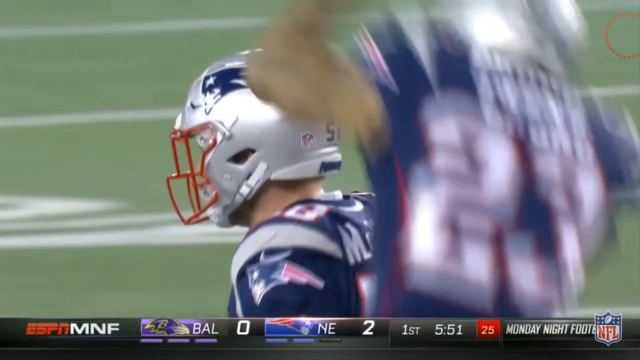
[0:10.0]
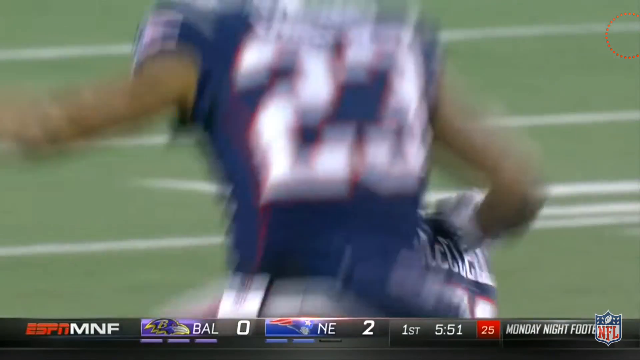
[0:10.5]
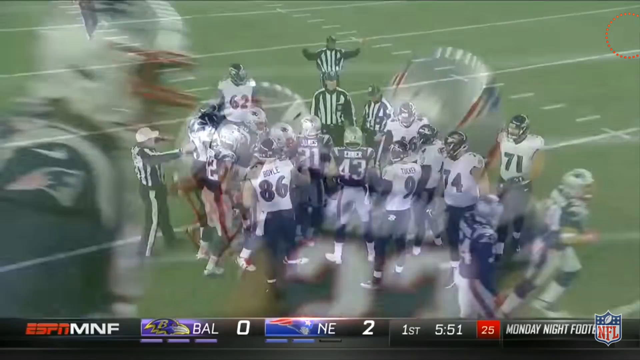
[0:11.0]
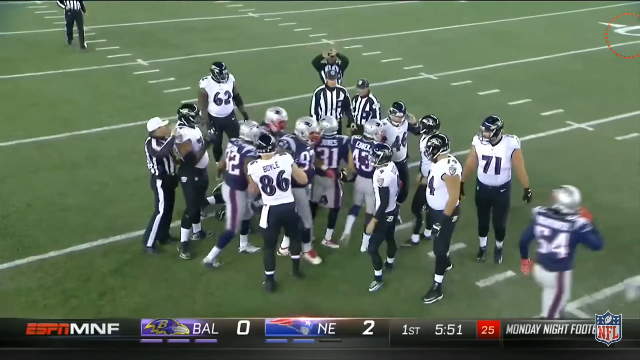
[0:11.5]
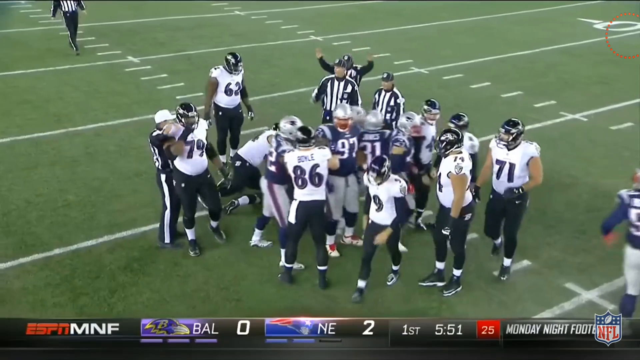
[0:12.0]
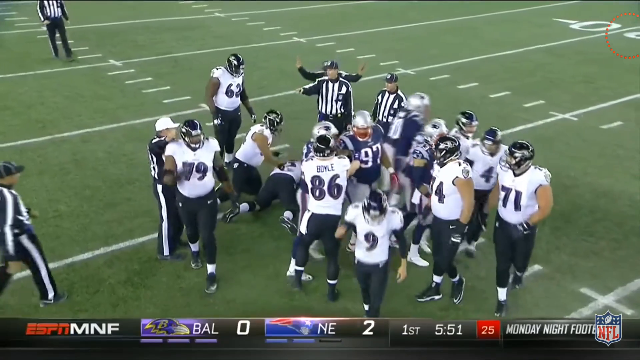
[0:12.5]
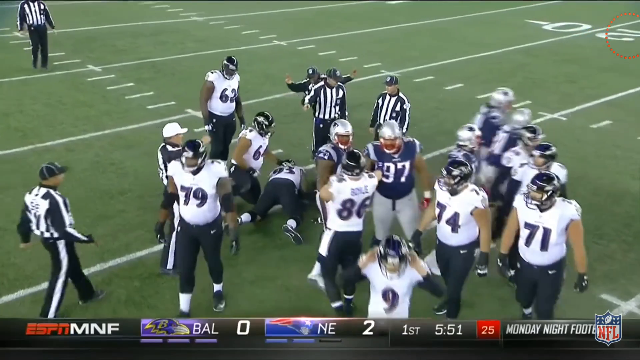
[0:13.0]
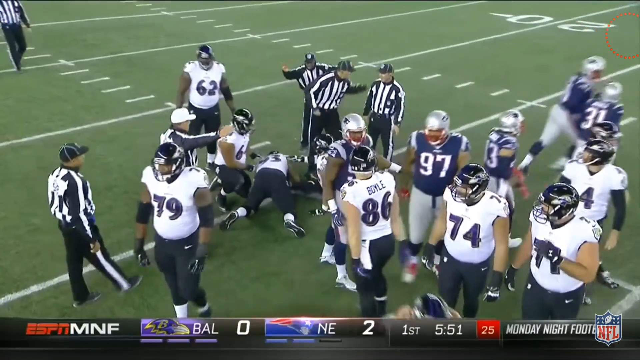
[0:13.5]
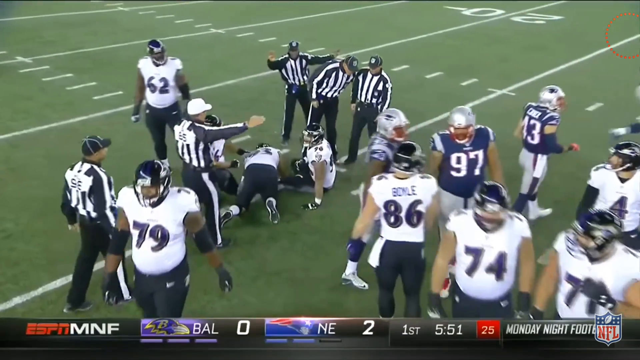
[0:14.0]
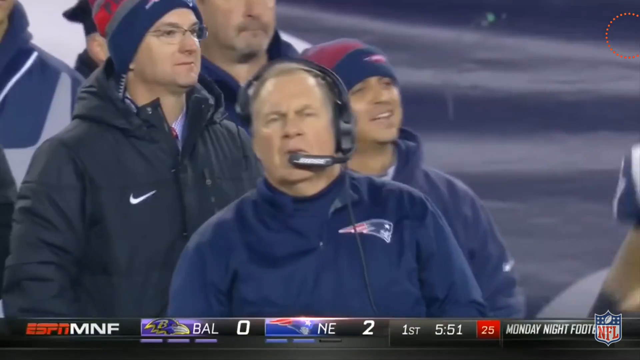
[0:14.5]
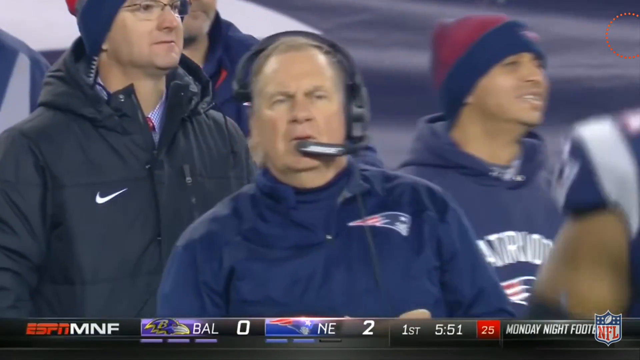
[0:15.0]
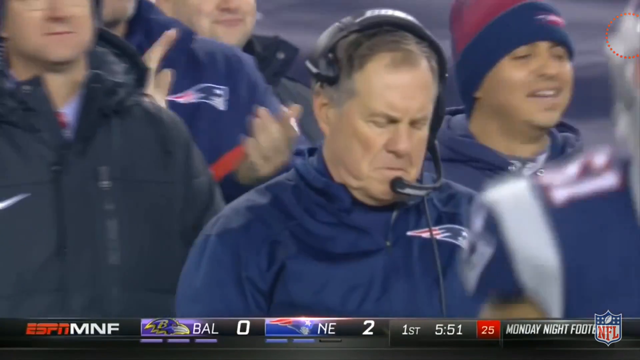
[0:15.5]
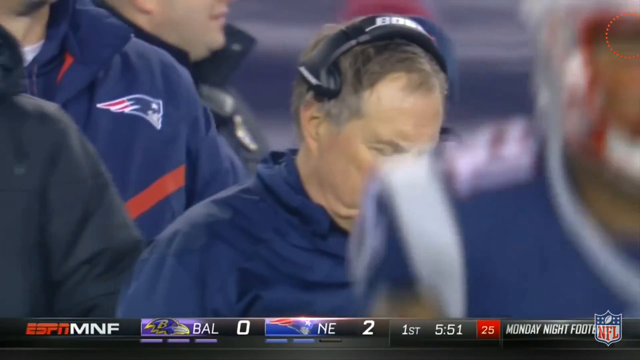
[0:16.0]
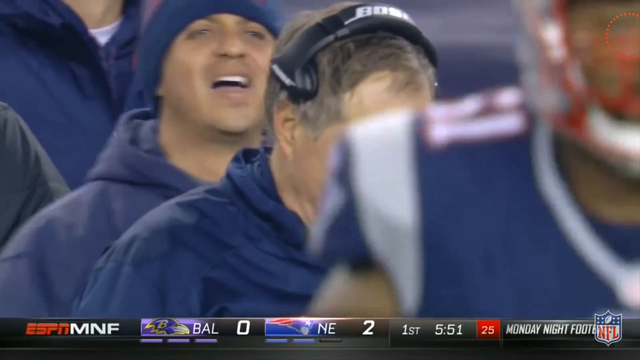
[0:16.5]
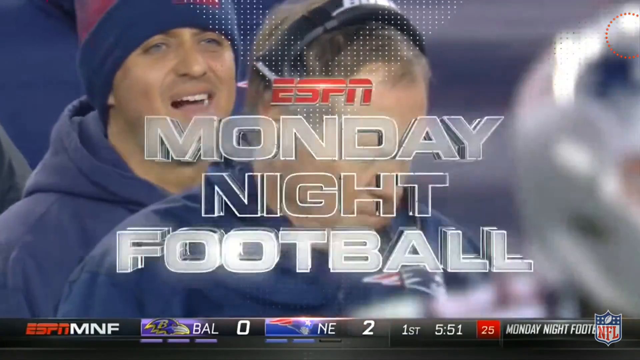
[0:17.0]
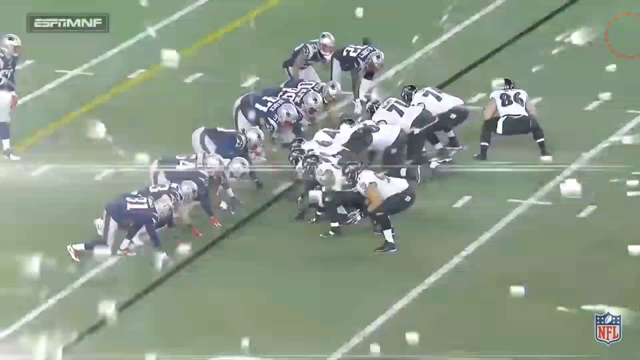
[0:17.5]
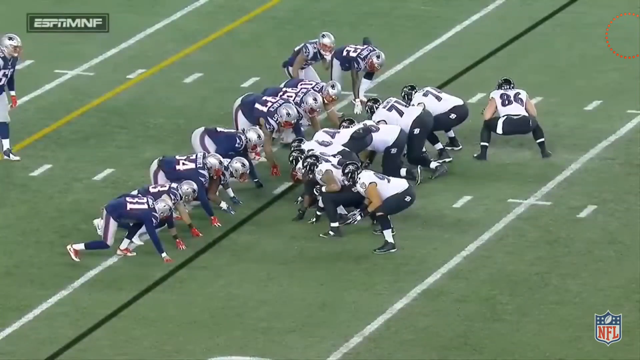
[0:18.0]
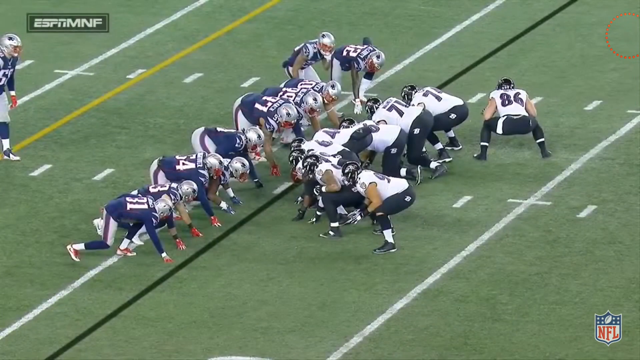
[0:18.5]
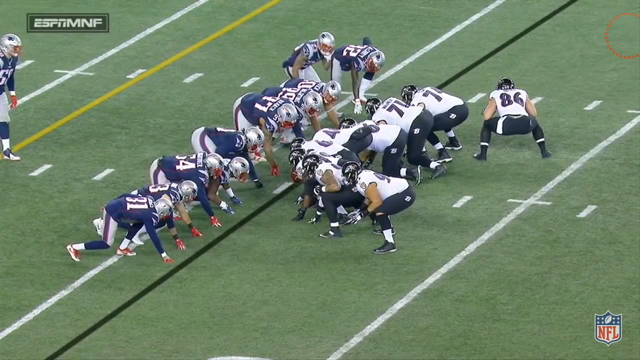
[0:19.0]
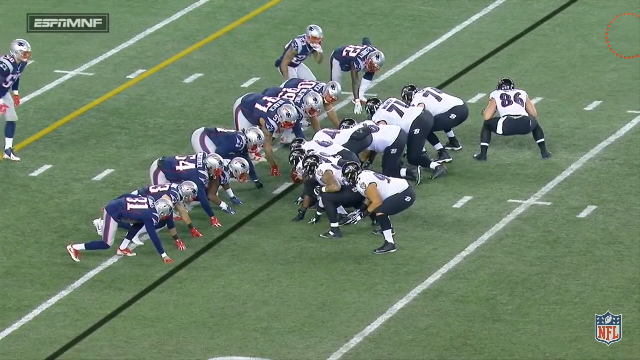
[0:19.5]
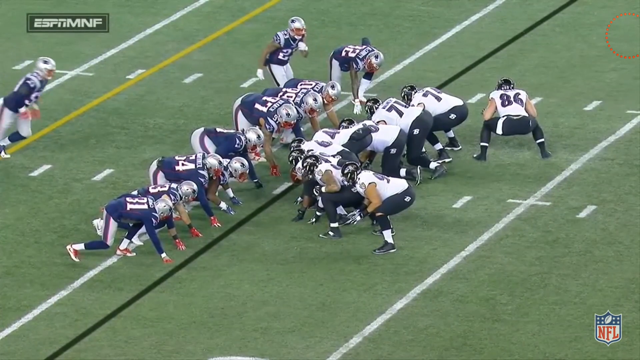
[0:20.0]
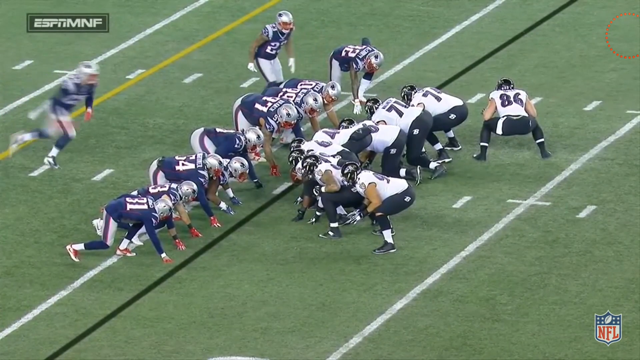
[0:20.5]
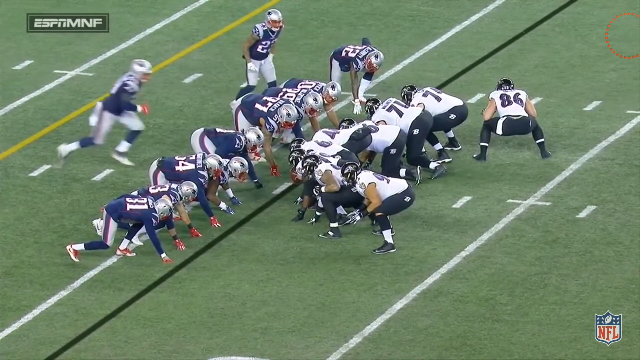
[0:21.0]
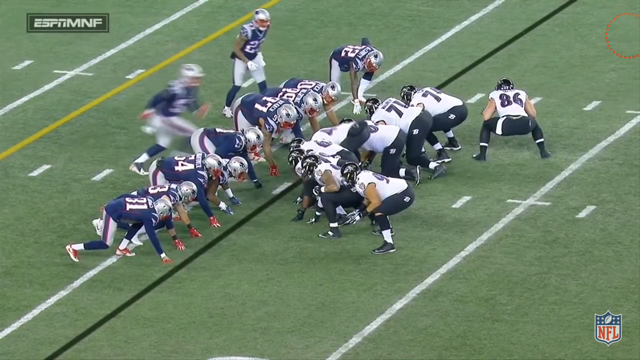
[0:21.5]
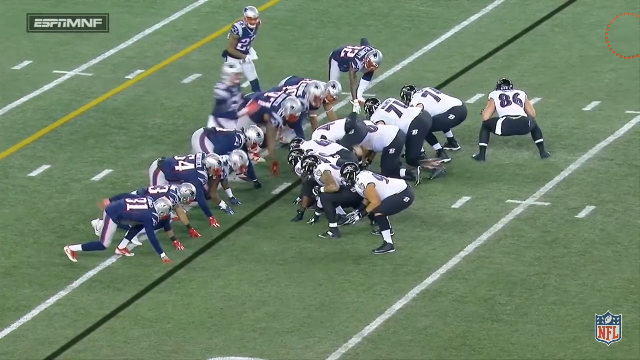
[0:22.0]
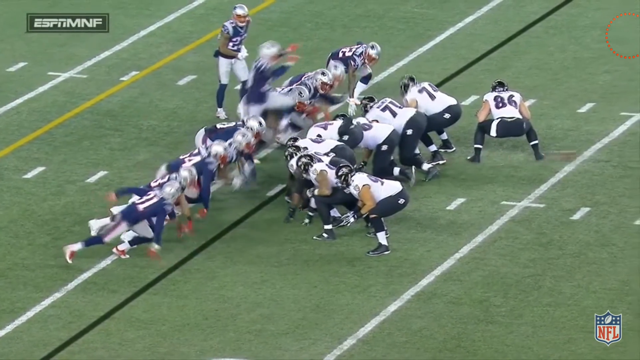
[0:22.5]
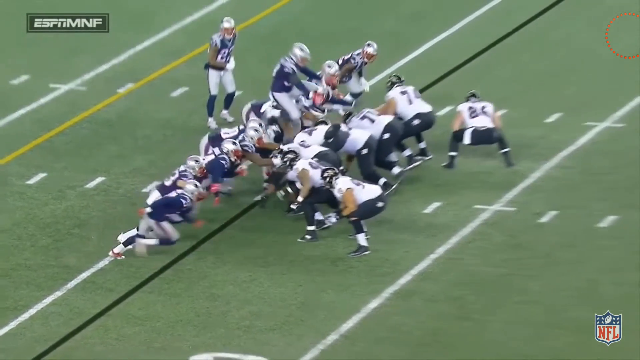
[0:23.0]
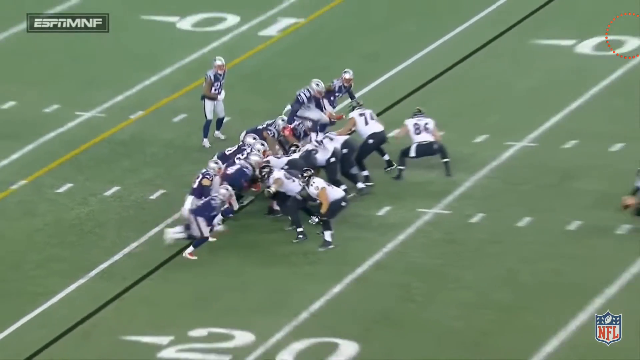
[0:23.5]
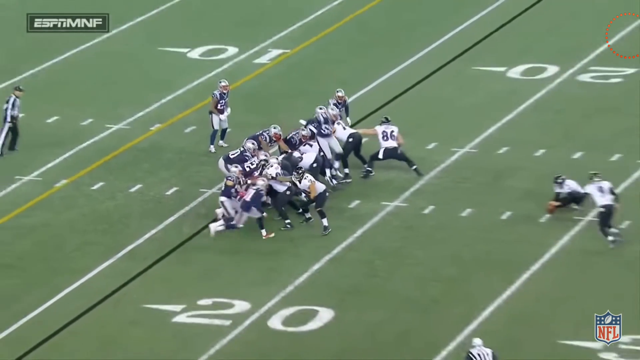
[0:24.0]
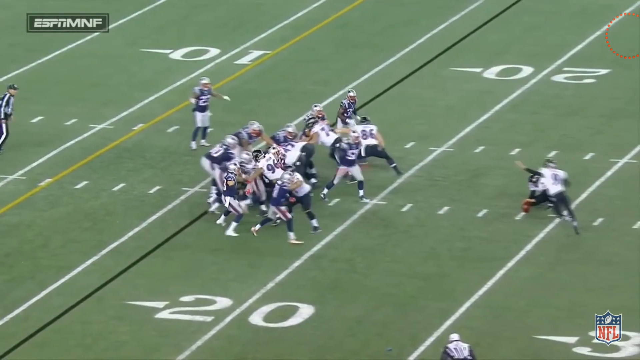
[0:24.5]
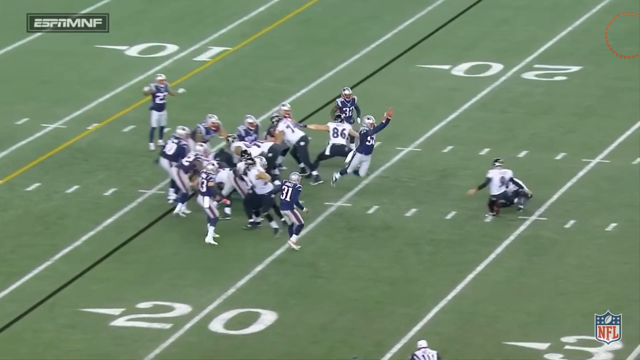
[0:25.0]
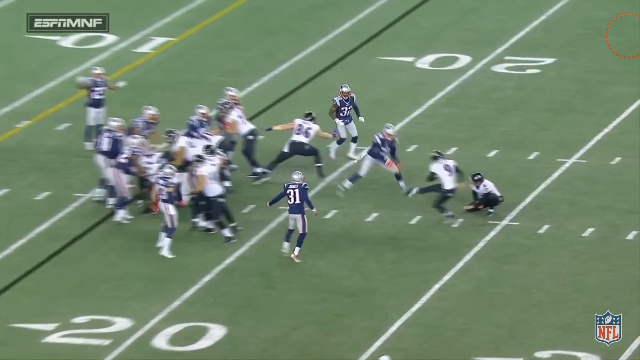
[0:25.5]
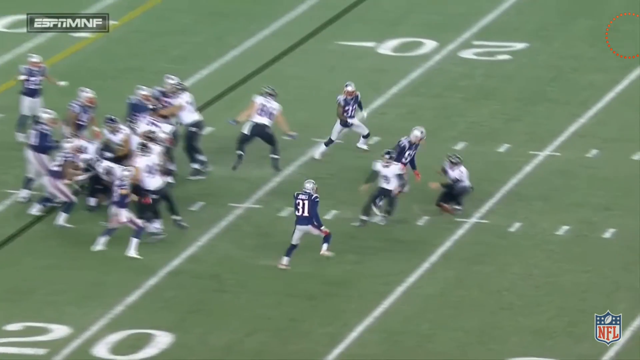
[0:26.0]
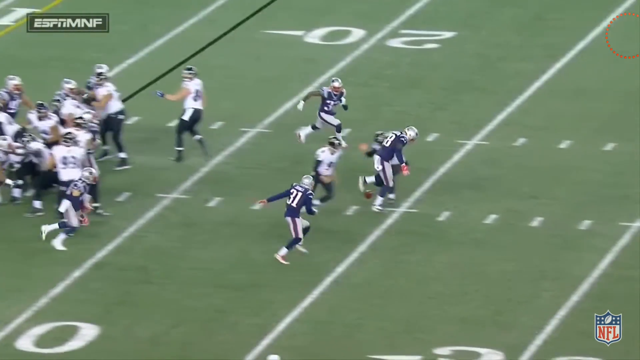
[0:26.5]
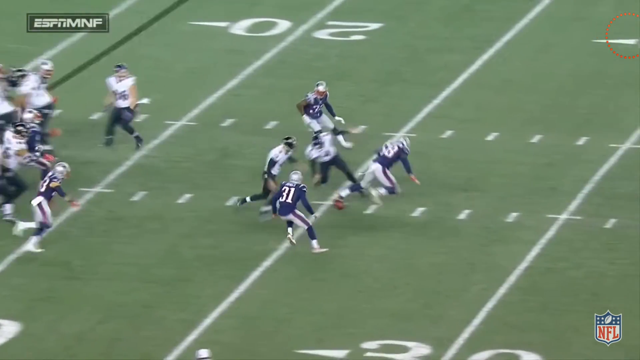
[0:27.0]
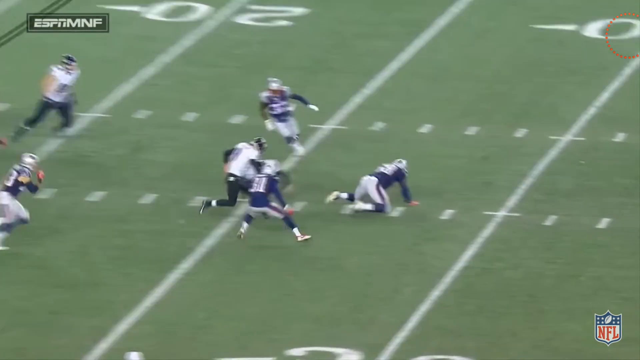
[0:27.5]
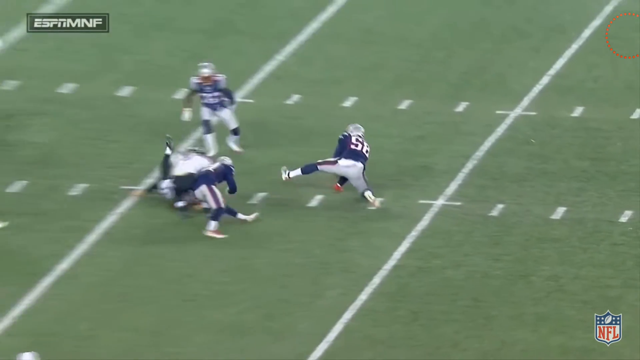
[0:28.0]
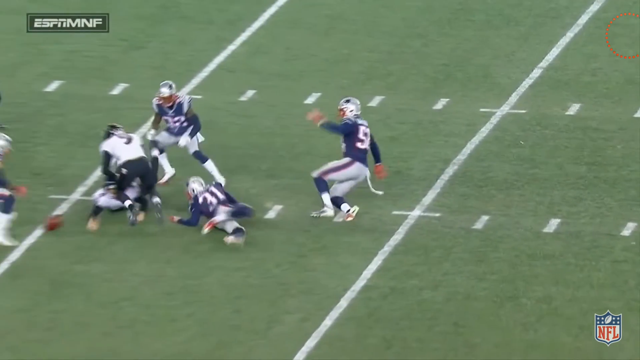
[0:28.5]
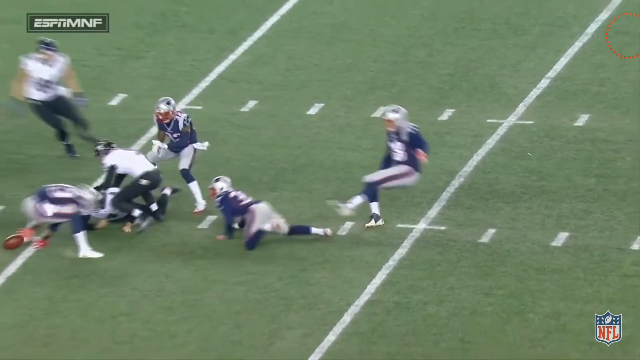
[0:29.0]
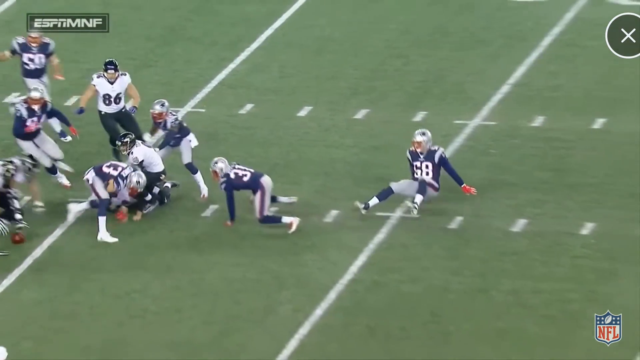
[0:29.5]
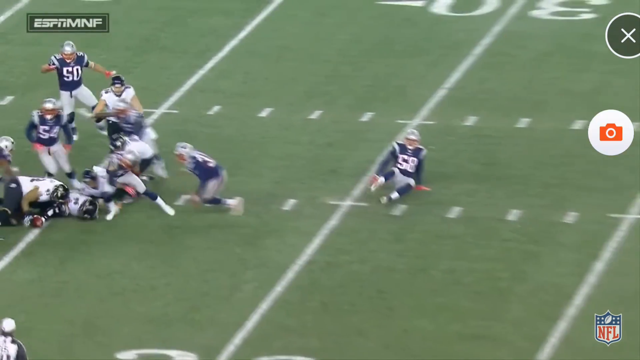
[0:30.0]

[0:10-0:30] New England Patriots players celebrate, apparently having successfully recovered the fumble. The play is shown from a different angle: a player rushes, jumps over one of the linemen and gets right in the kicker's face, and right as the kicker kicks the ball he swats it right in front of him. The Patriots recover the ball, resulting in a turnover.